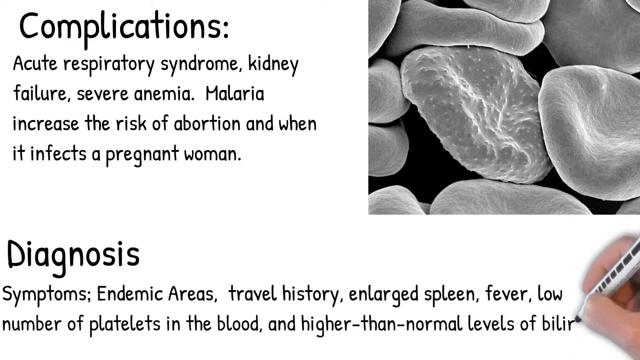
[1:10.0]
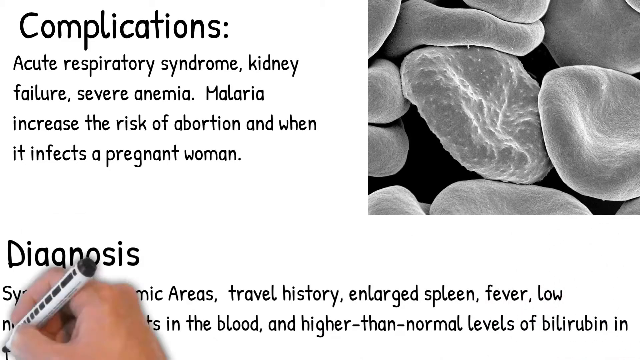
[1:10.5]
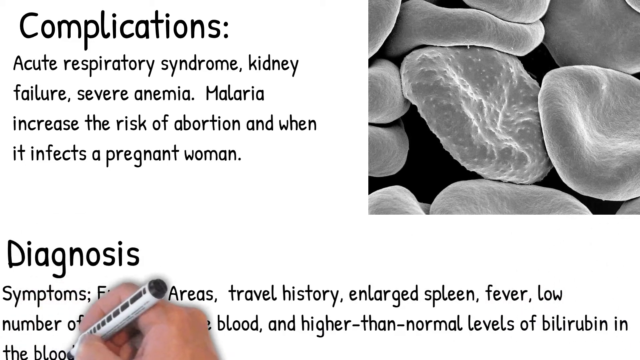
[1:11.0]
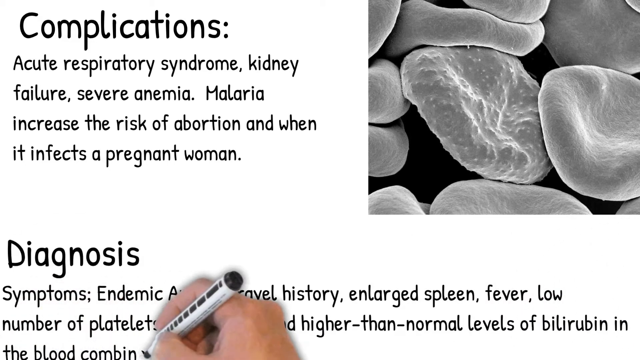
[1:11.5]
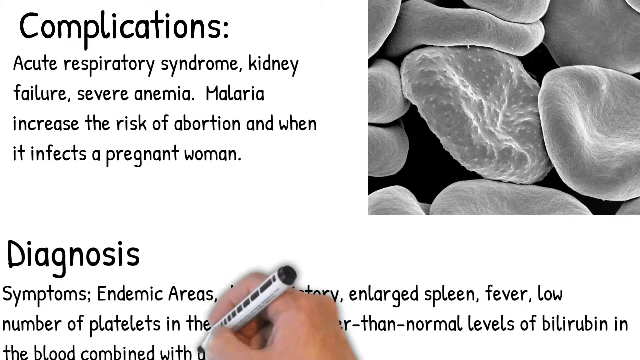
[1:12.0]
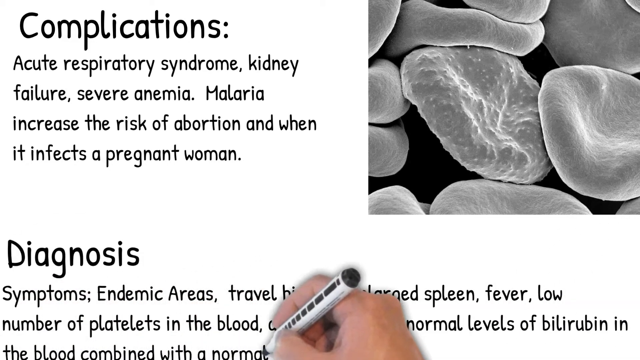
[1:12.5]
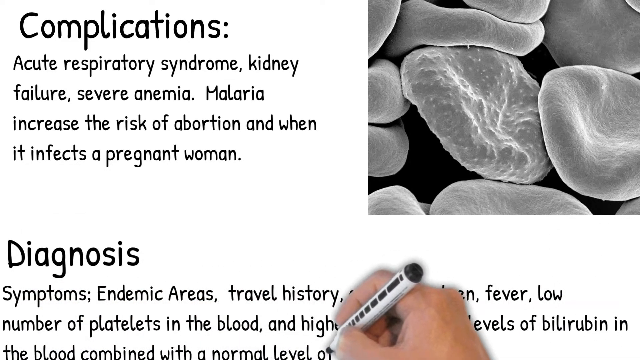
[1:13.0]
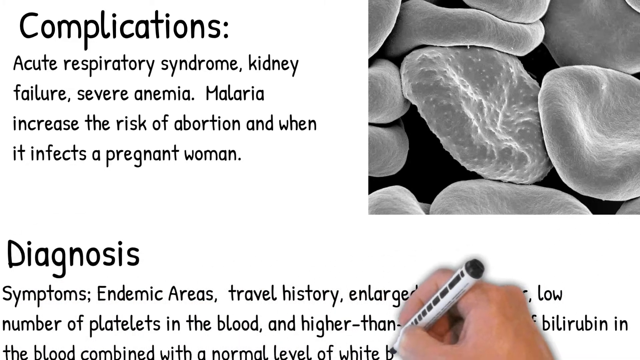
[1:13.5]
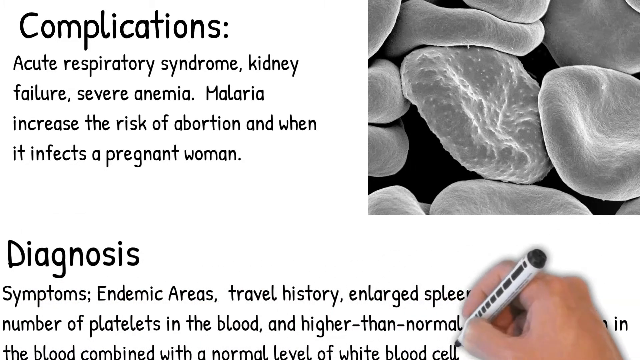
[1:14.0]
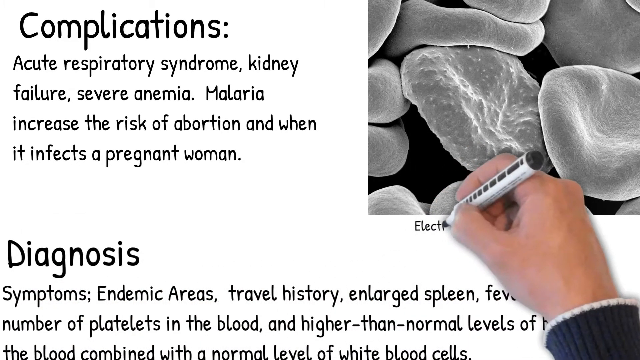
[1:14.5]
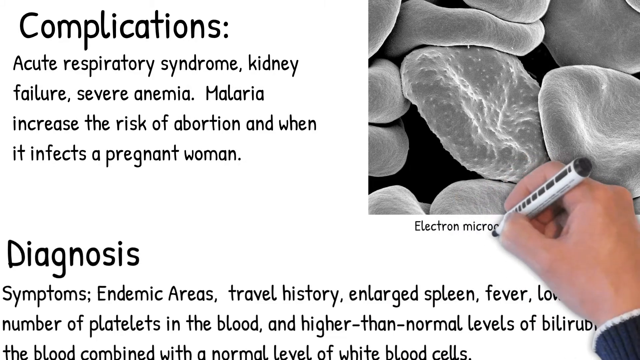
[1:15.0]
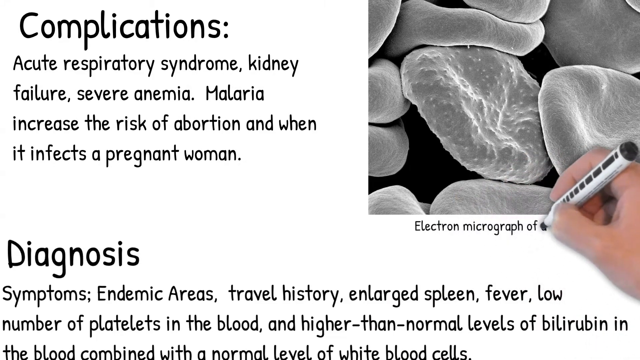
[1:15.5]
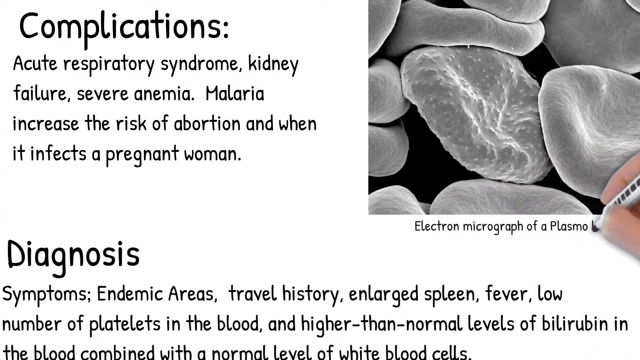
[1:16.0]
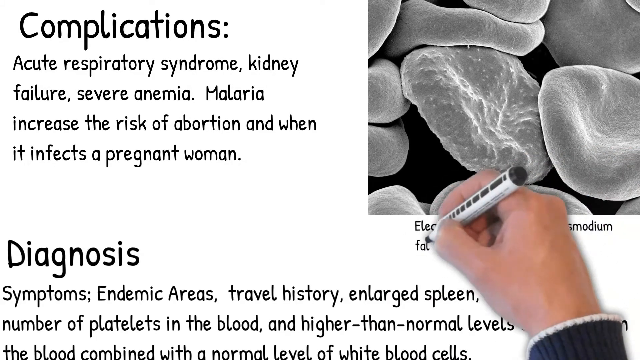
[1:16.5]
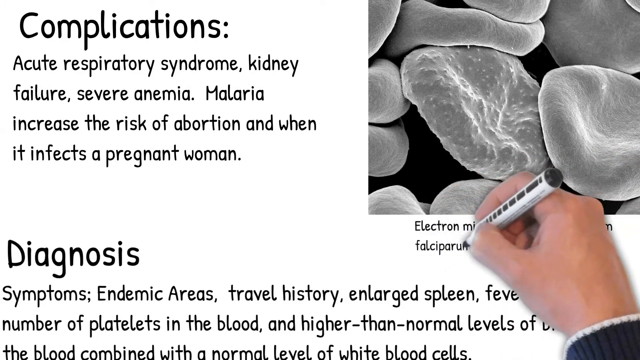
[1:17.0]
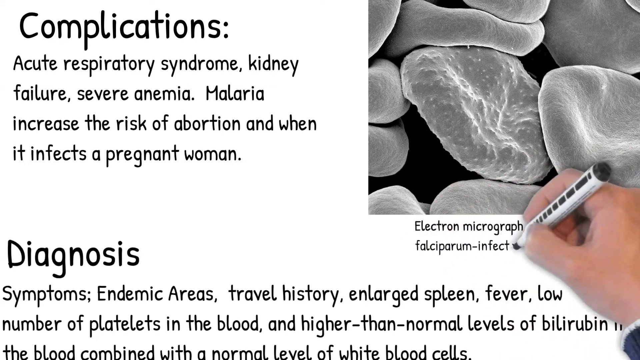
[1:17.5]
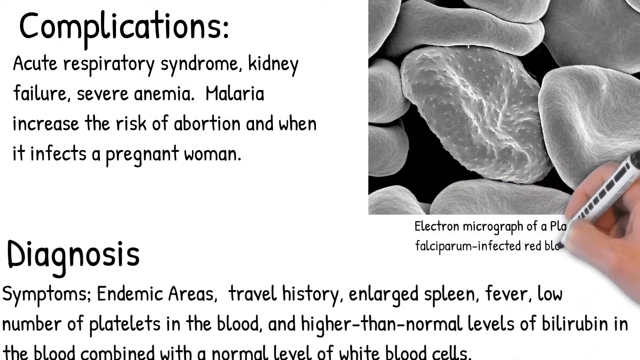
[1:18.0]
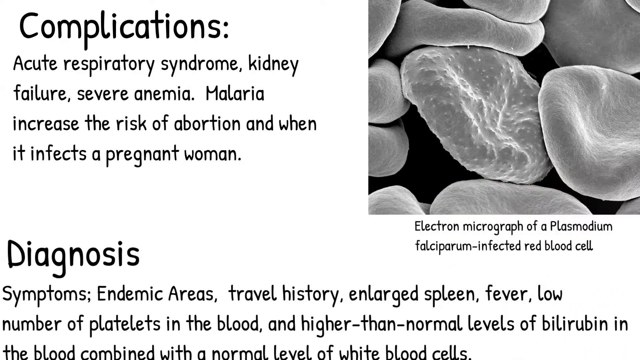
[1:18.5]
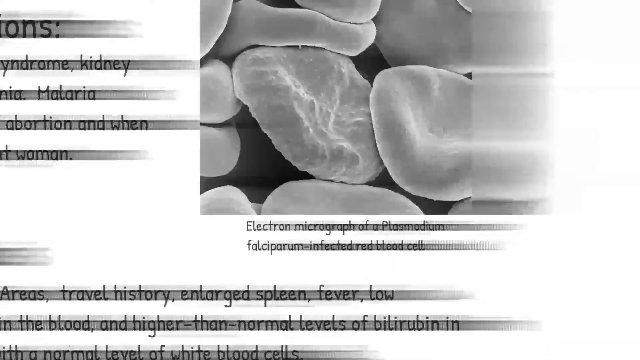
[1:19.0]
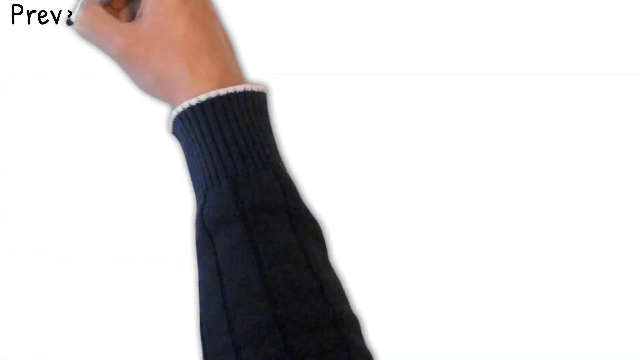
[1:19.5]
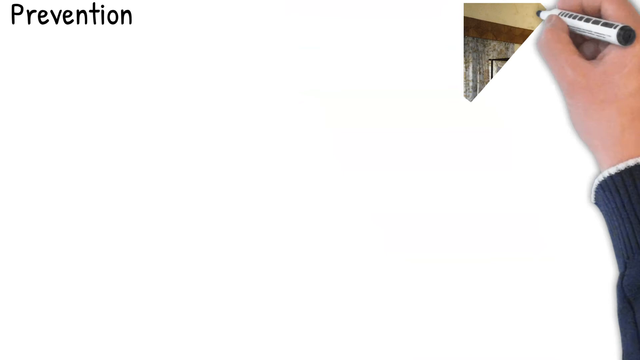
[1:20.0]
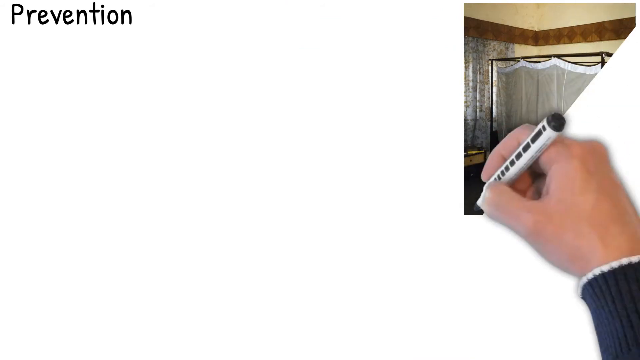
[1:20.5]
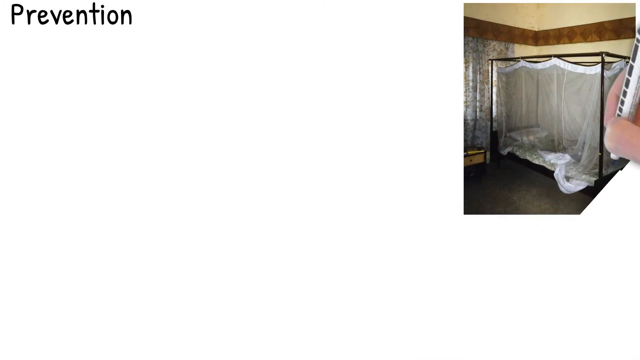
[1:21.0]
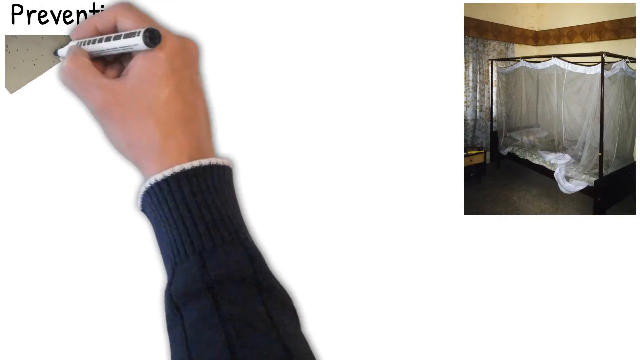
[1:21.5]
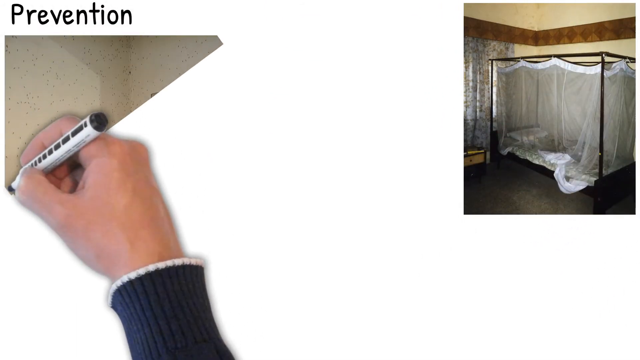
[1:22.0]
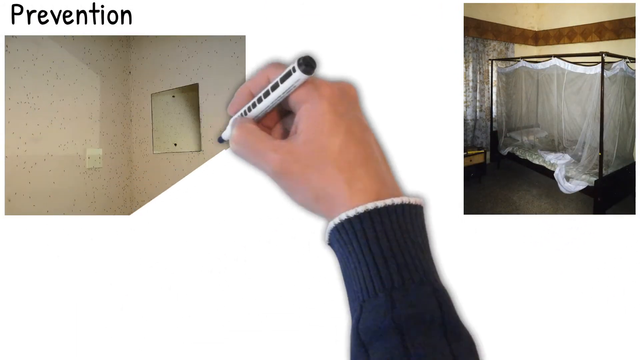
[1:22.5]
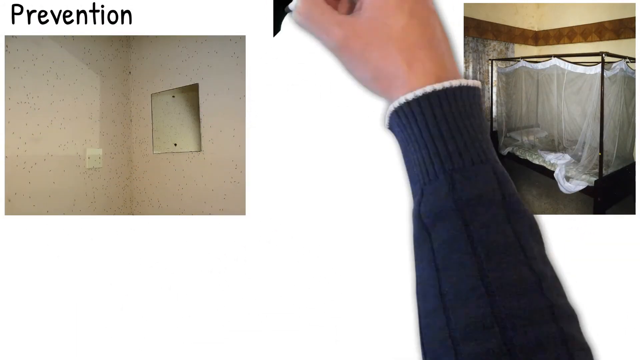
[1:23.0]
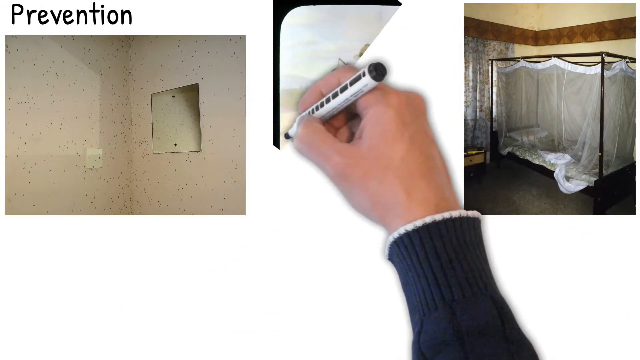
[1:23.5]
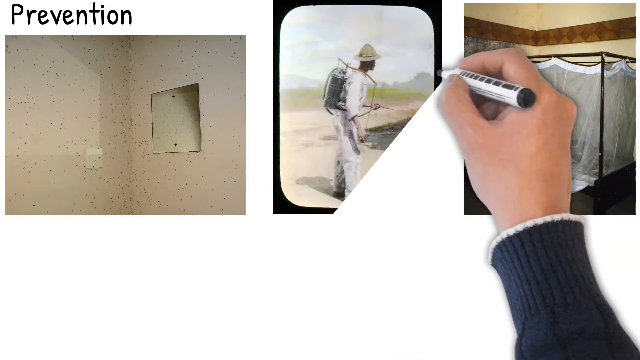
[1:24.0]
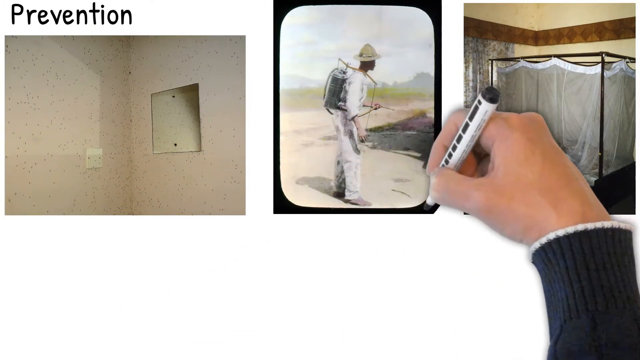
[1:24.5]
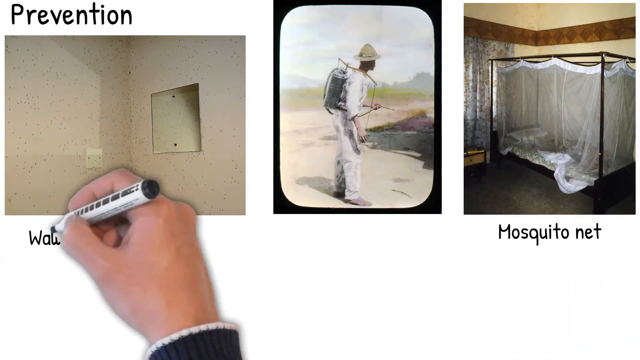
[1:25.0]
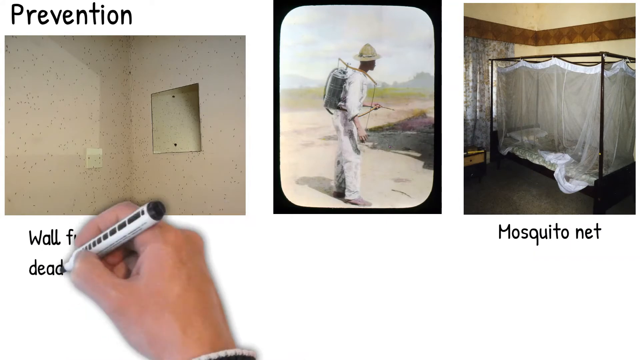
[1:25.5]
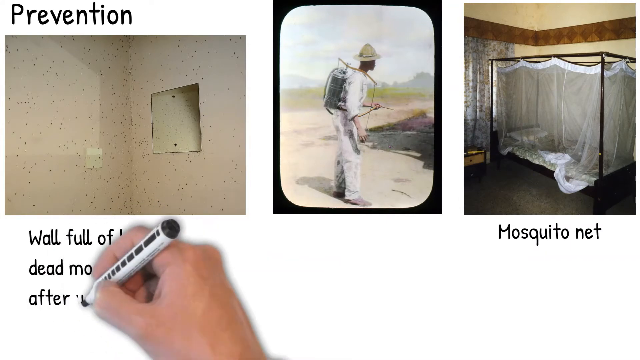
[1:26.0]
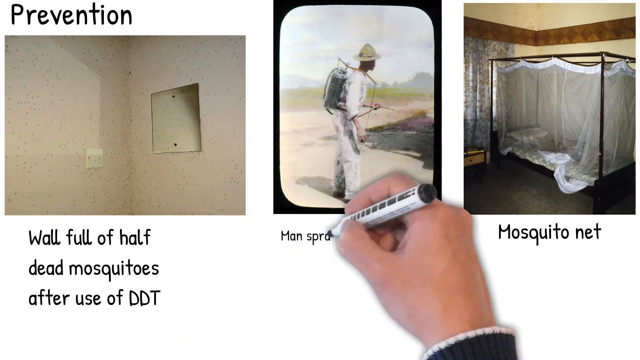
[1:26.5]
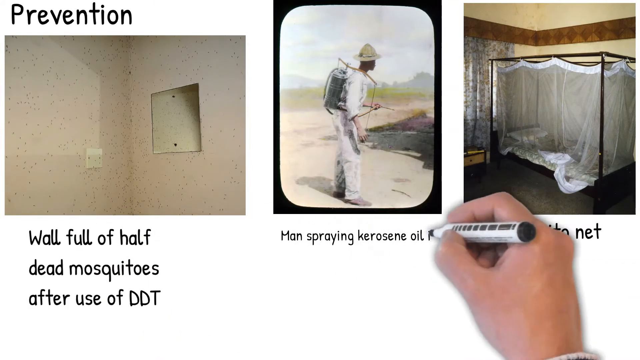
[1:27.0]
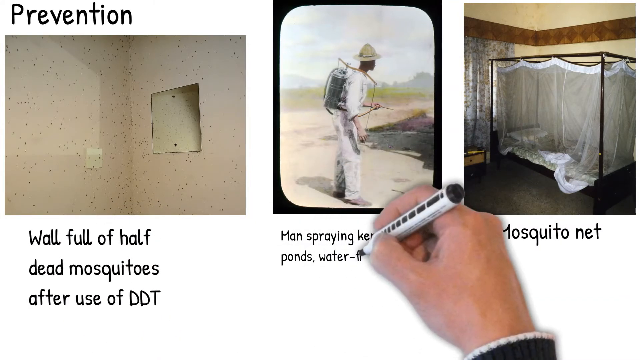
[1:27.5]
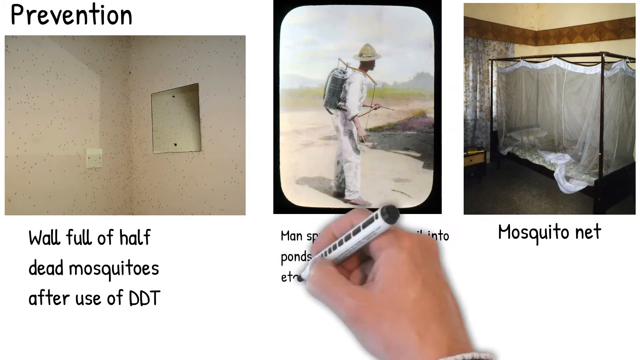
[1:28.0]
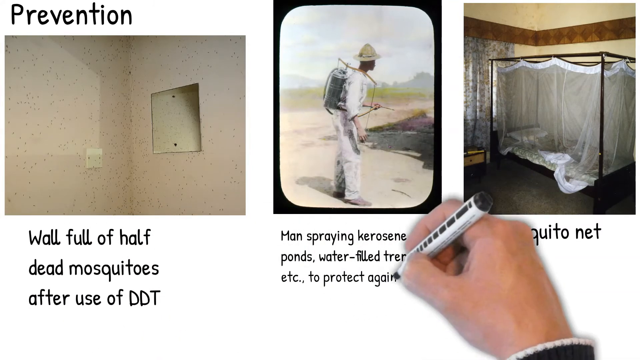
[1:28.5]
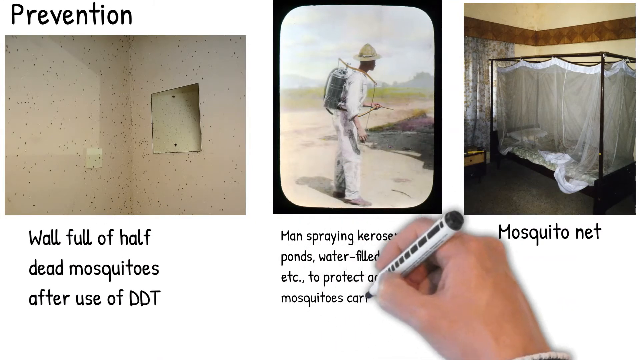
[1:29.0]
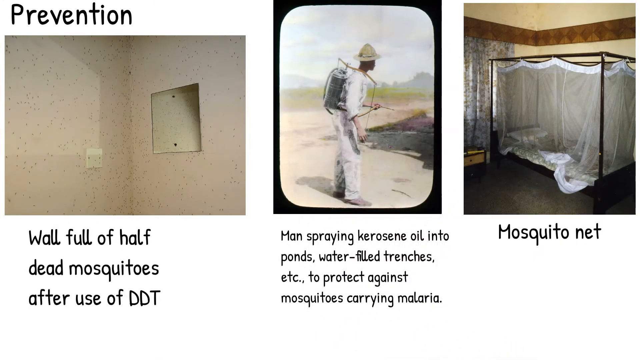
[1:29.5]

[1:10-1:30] The screen has a plain white background. In the top right corner is a black and white photograph of what looks like some blood cells, or a close-up of some type of human cells. Text on the left reads "complications: acute respiratory syndrome, kidney failure, severe anemia, malaria increase, the risk of abortion, and when it infects a pregnant woman". Underneath, a new paragraph reads "diagnosis: symptoms, endemic areas, travel history, enlarged spleen, fever, low number of platelets in the blood, and higher than normal levels of bilirubin in the blood, combined with a normal level of white blood cells". The animated hand adds a caption to the image of cells reading "electron micrograph of plasadium falsiparum infected blood cell". A new screen with a plain white background then appears, reading "prevention", with three photographs in the center. The first appears to show just a room with a plain wall, captioned "wall full of half-dead mosquitoes after use of DDT". The middle photograph shows a man wearing a hat and a full white suit, captioned "man spraying kerosene oil into ponds, water-filled trenches, etc., to protect against mosquitoes carrying malaria". The third shows a bed with a kind of canvas around it, captioned "mosquito net".